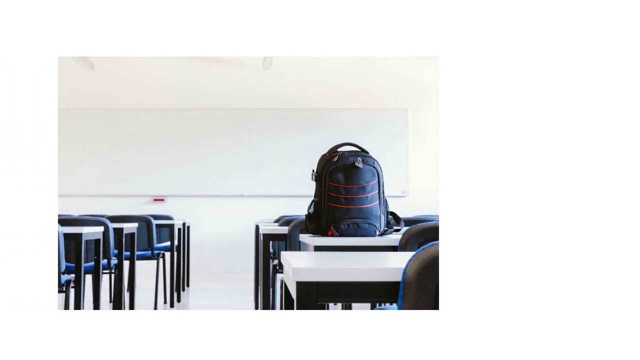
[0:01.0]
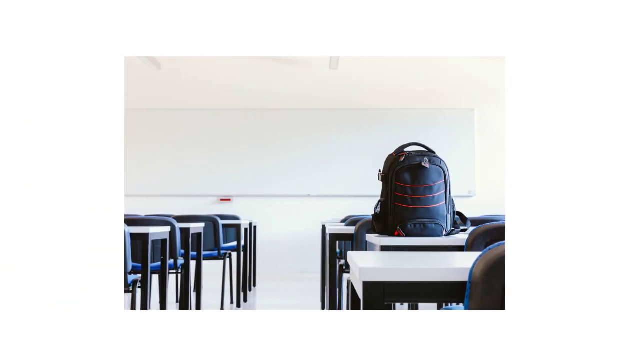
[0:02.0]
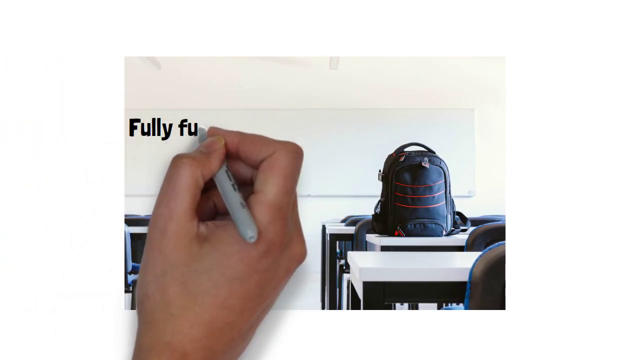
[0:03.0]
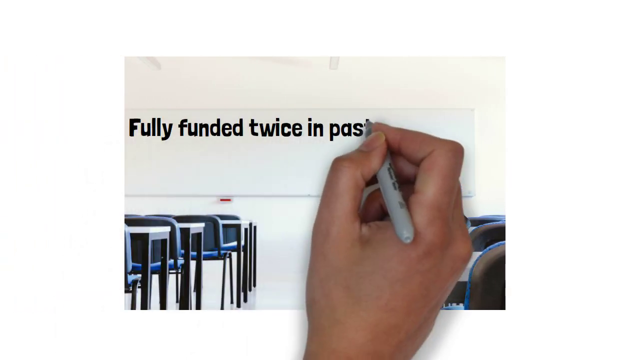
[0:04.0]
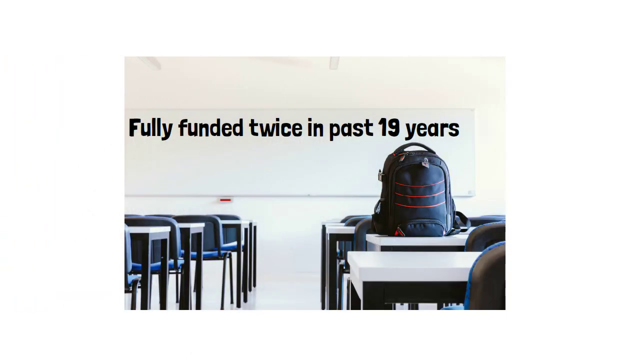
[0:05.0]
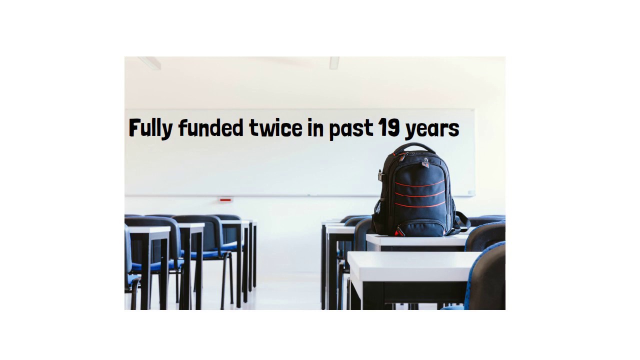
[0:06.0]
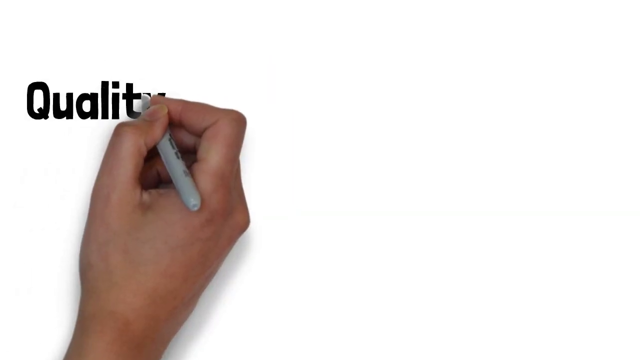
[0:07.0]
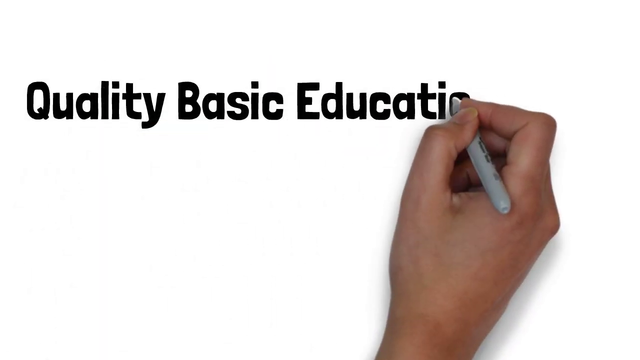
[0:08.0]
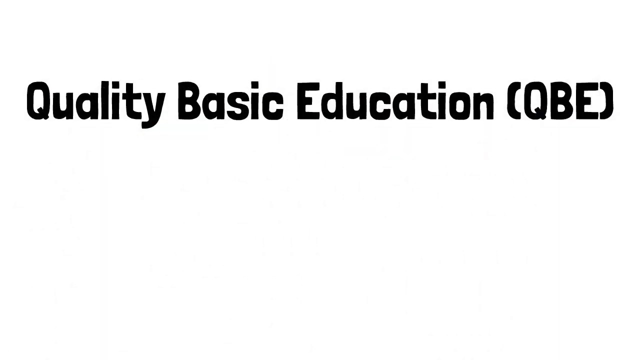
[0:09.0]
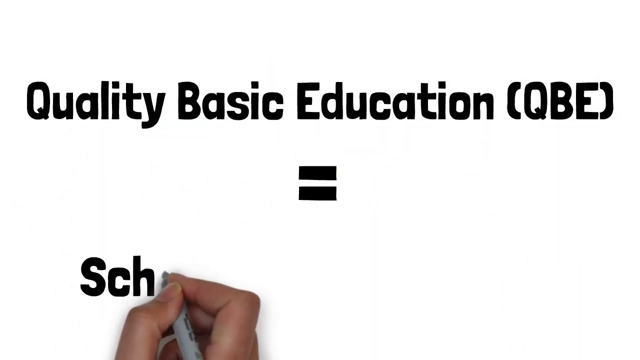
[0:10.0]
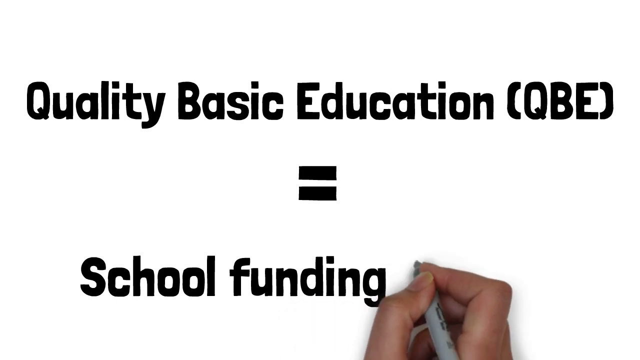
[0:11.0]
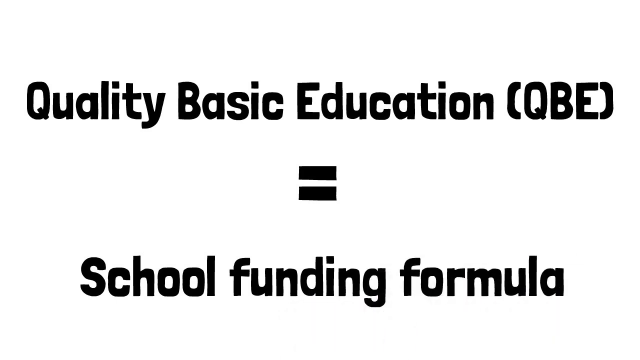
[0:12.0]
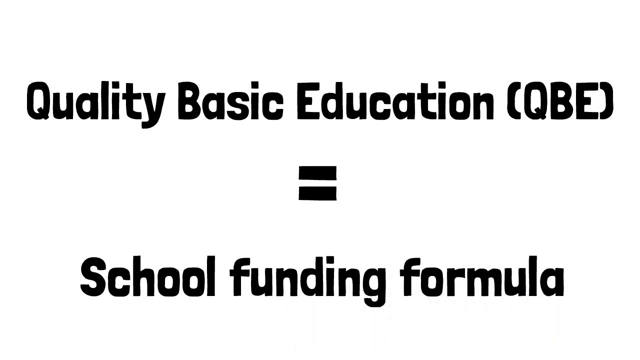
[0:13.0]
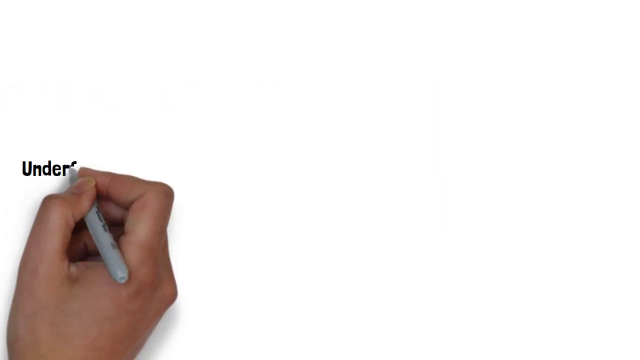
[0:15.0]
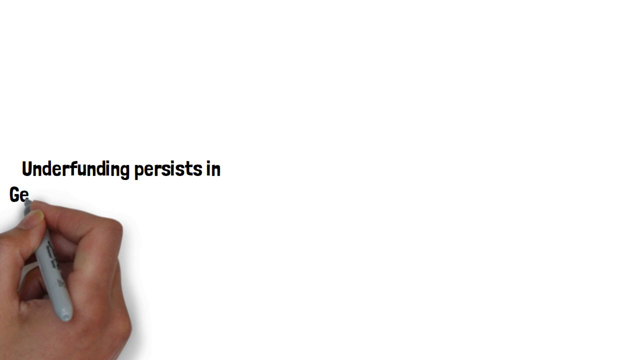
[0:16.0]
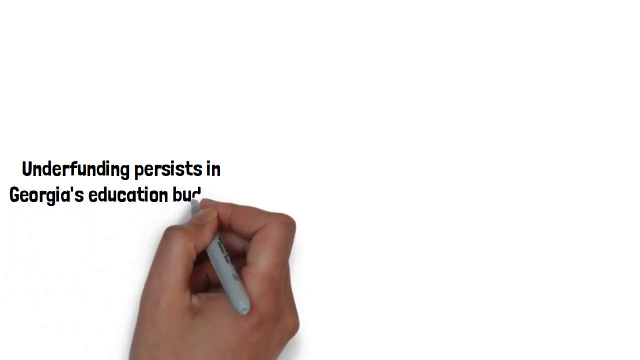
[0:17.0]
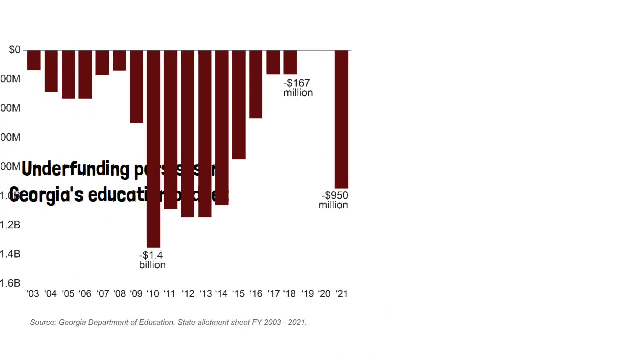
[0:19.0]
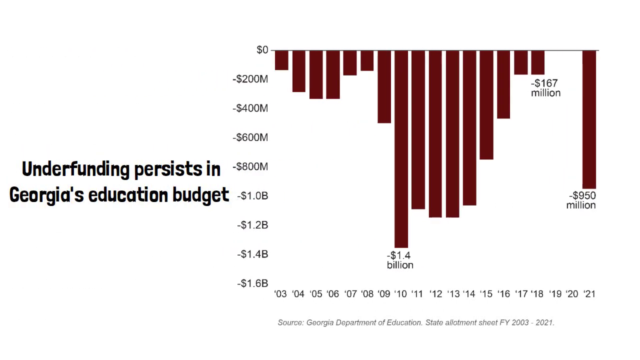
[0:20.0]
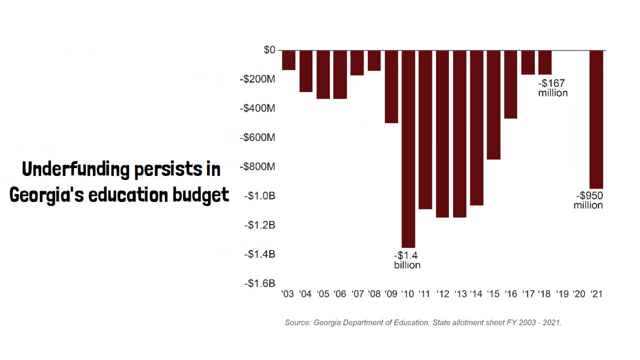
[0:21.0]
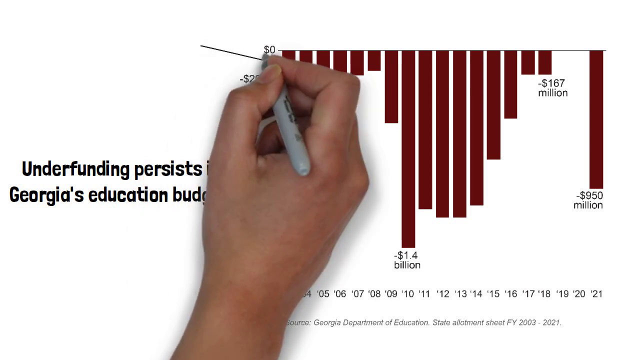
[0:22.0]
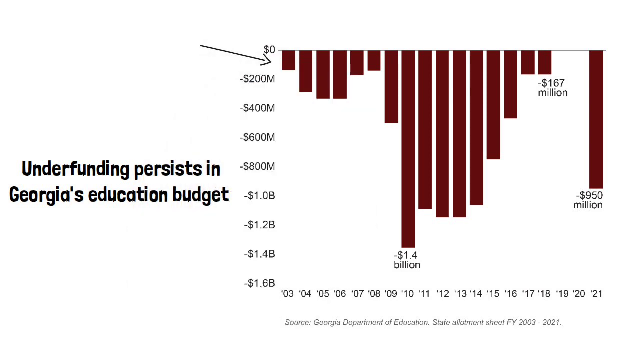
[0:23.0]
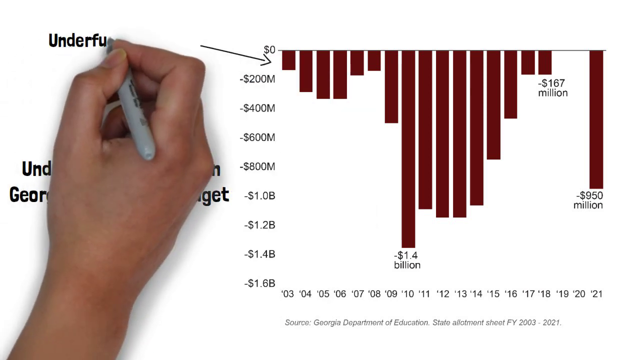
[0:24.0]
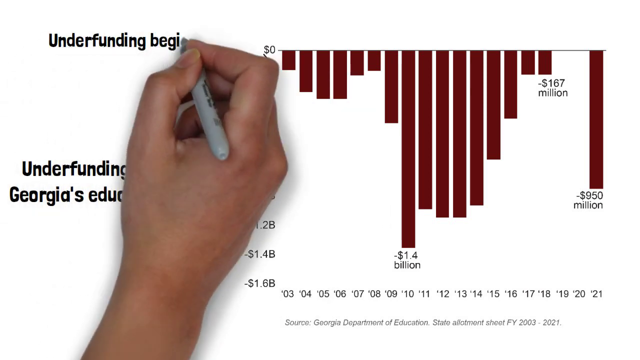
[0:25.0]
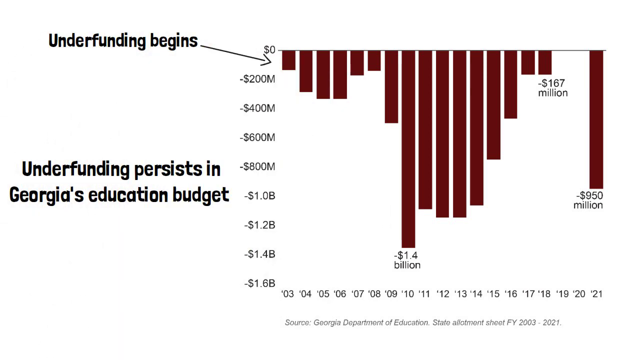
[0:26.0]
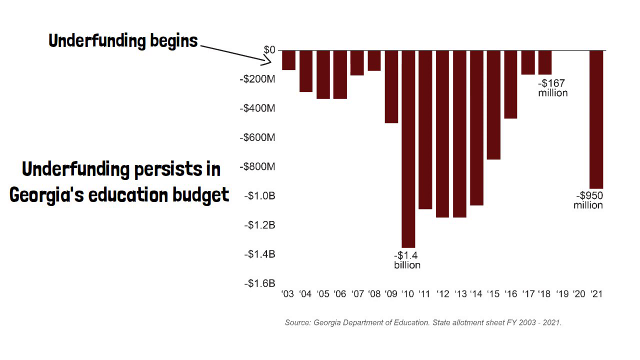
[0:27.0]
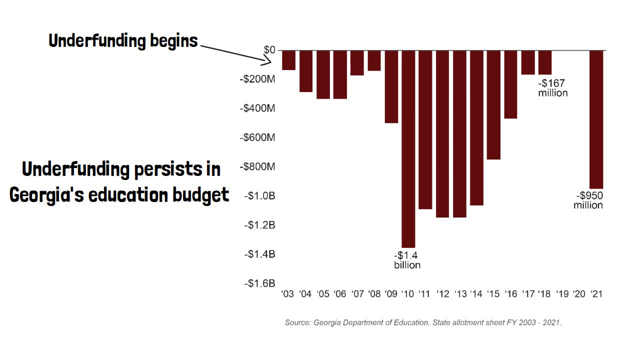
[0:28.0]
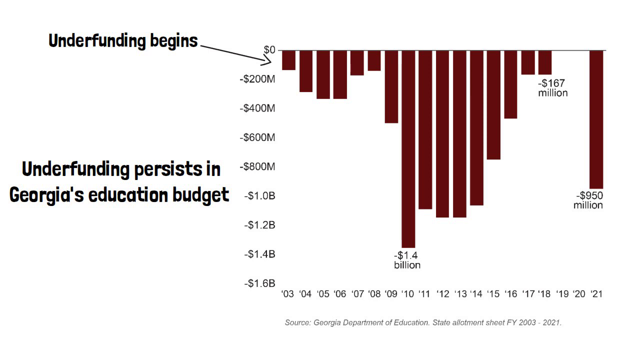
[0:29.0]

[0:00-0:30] The video opens on a white screen. An image slides in from the left to the middle of the screen, showing an empty classroom with a few desks from a low angle, with a black backpack on one of the desks in front. A hand comes in front of the image and, with a marker, writes "fully funded twice in the past 19 years" on the empty whiteboard at the front of the picture. The image then disappears, leaving the screen white, and a man's hand comes up from the bottom and writes "quality basic education equals school funding formula." This stays in the center of the screen until it slides to the left, leaving a white screen again. The hand comes up and writes "underfunding persists in Georgia's education budget" on the left side. On the right side, an image slides in from the left: a graph with red bars, easily readable. The hand draws an arrow from the top left of the graph into the first bar, then comes up on the left and types "underfunding begins" by the arrow. This stays on screen, and the hand comes up from the bottom and draws another arrow pointing from the bottom left of the graph toward the biggest bar.